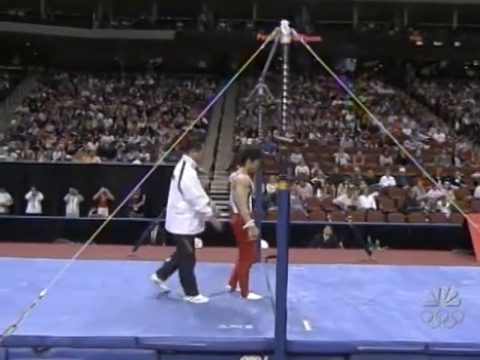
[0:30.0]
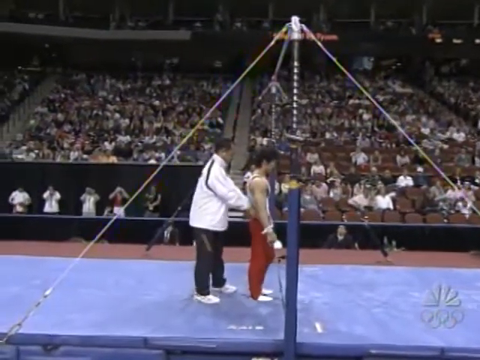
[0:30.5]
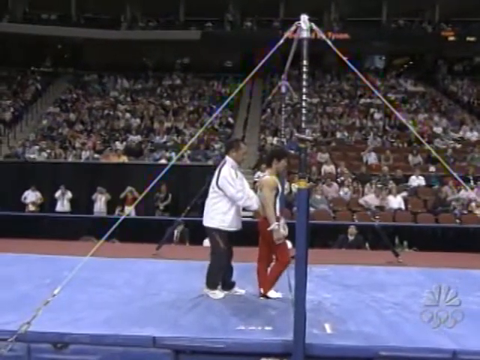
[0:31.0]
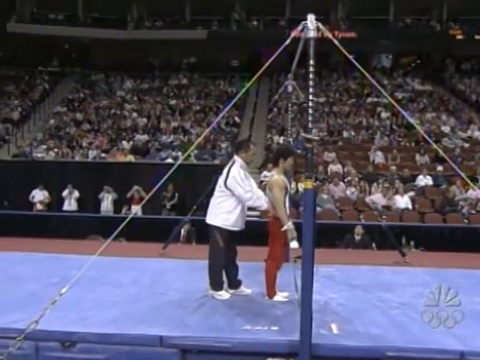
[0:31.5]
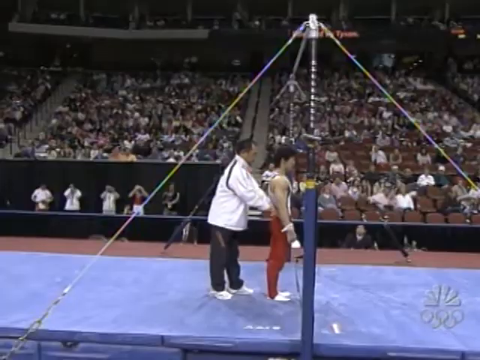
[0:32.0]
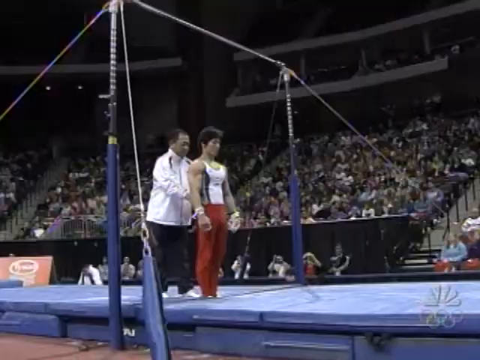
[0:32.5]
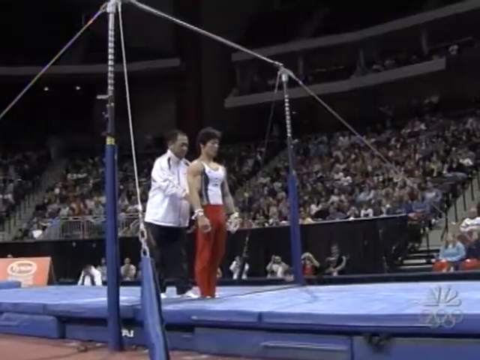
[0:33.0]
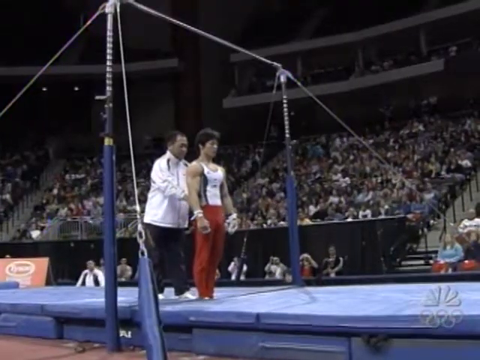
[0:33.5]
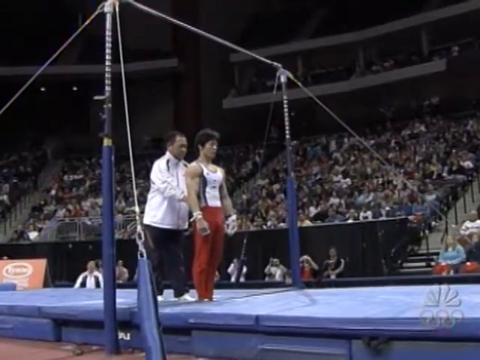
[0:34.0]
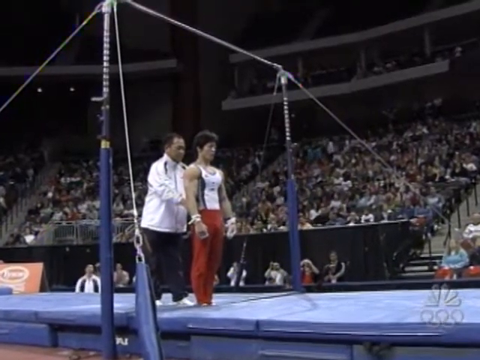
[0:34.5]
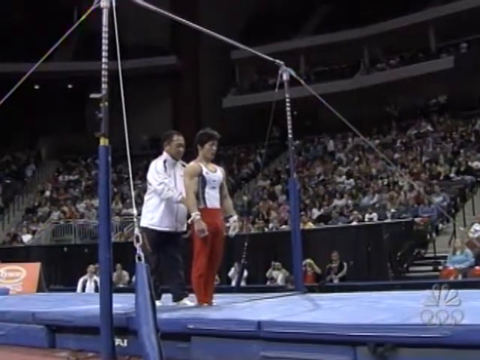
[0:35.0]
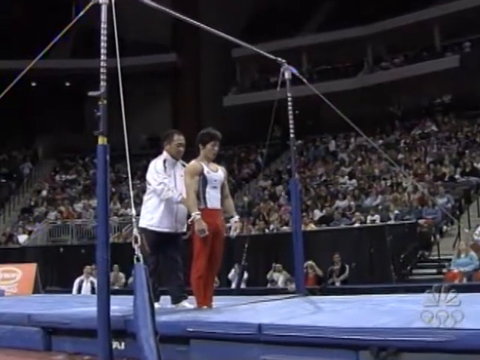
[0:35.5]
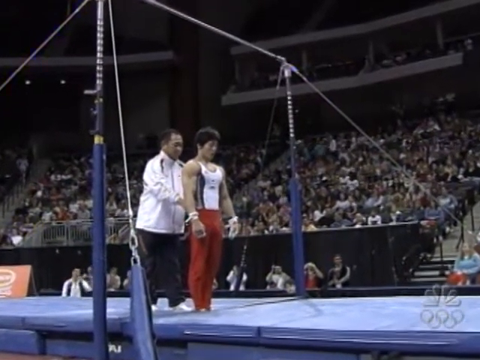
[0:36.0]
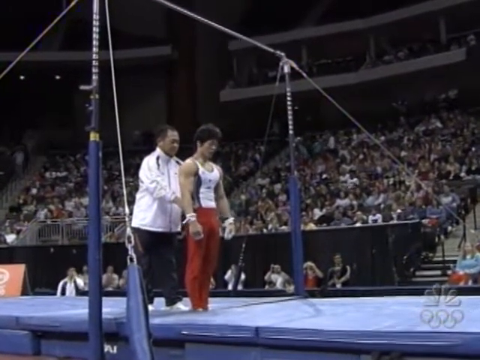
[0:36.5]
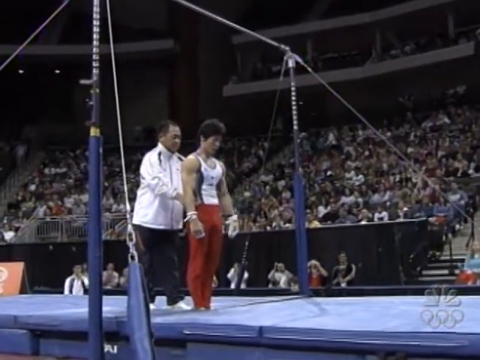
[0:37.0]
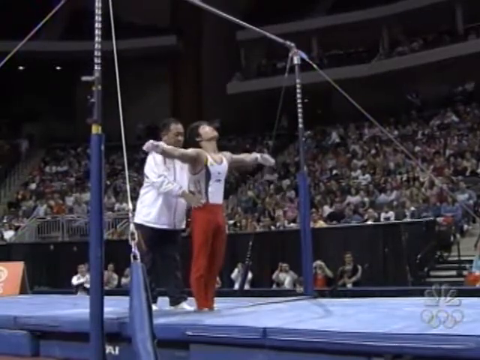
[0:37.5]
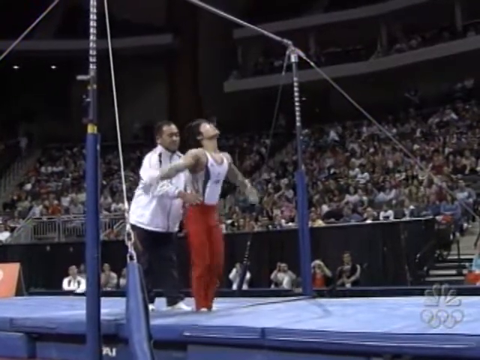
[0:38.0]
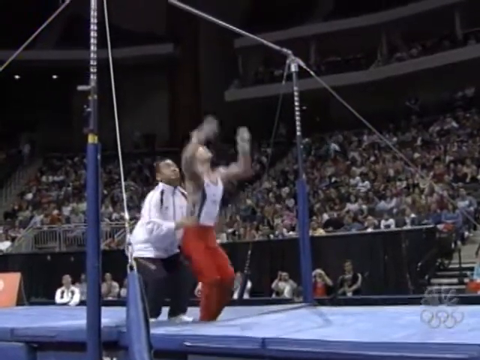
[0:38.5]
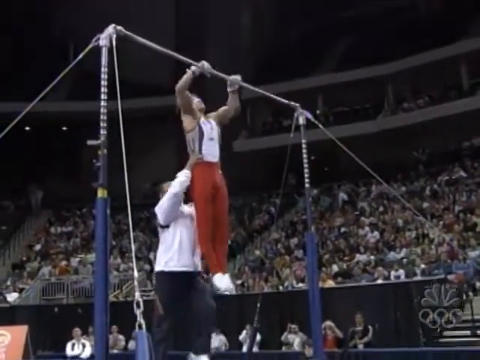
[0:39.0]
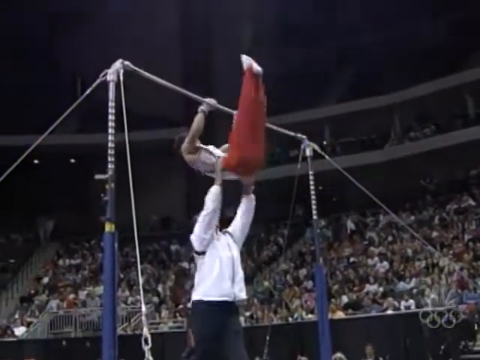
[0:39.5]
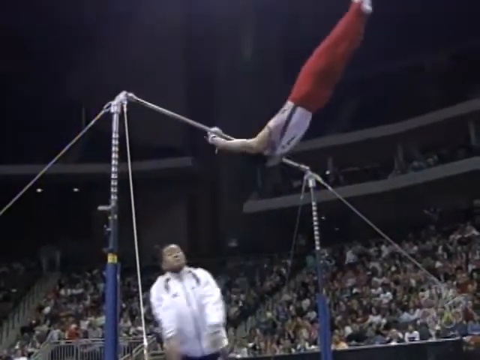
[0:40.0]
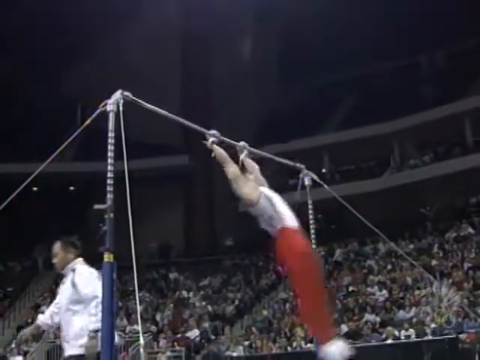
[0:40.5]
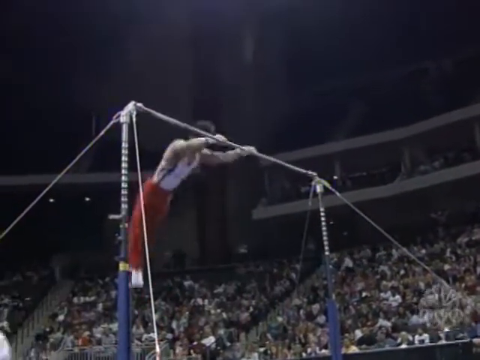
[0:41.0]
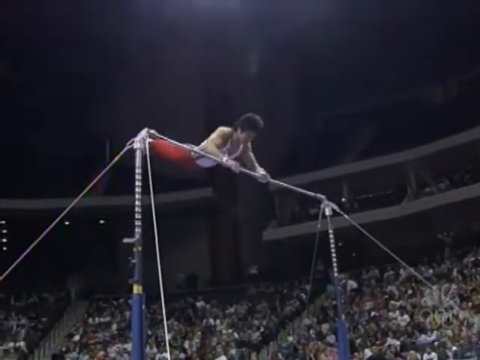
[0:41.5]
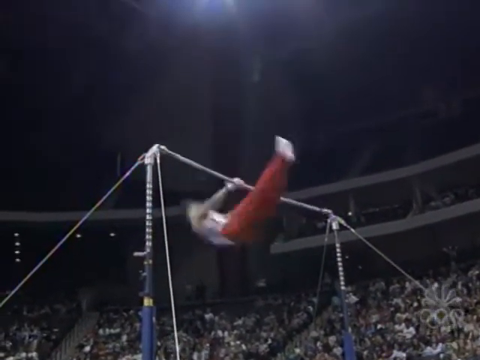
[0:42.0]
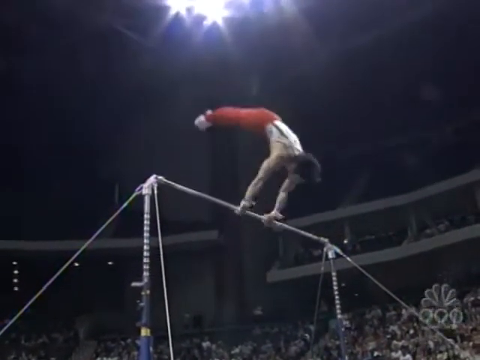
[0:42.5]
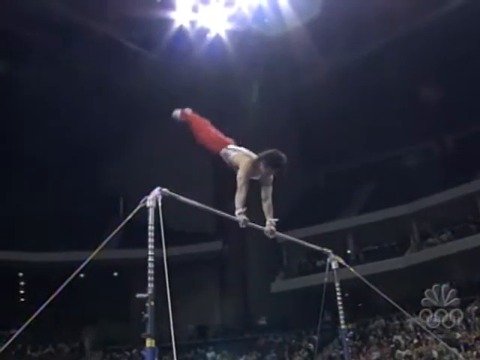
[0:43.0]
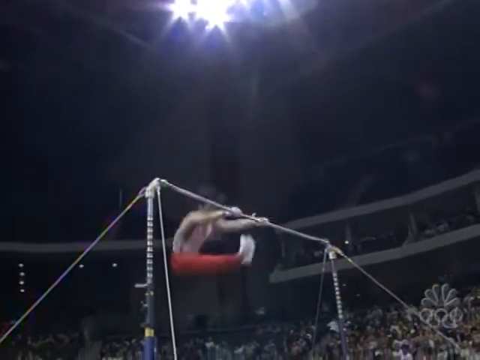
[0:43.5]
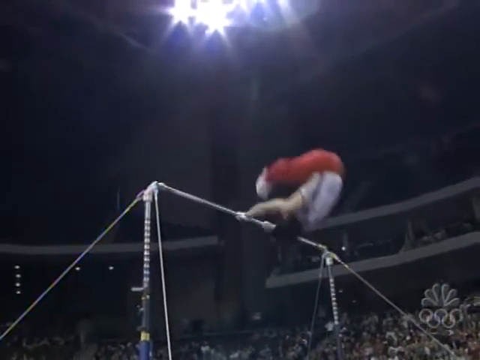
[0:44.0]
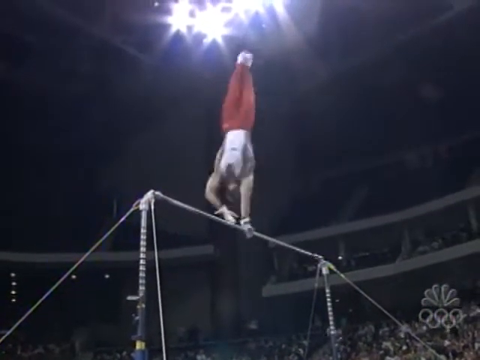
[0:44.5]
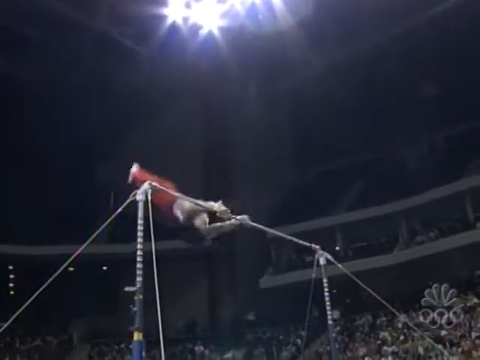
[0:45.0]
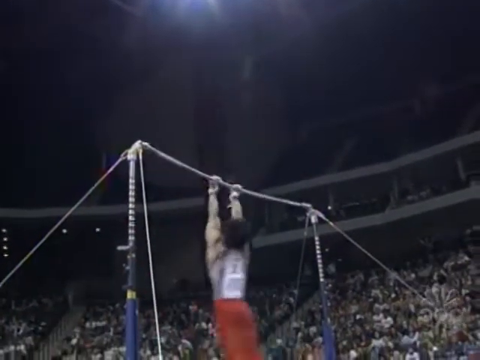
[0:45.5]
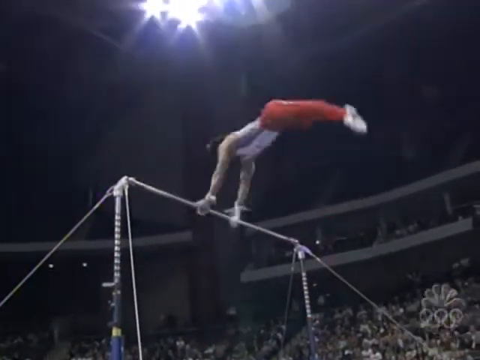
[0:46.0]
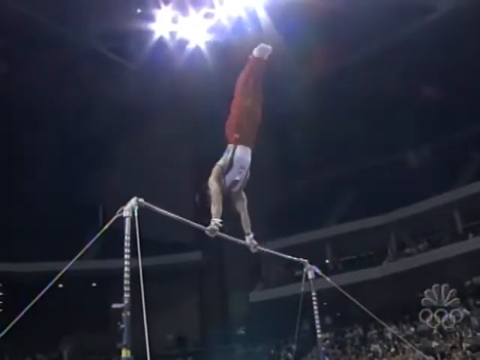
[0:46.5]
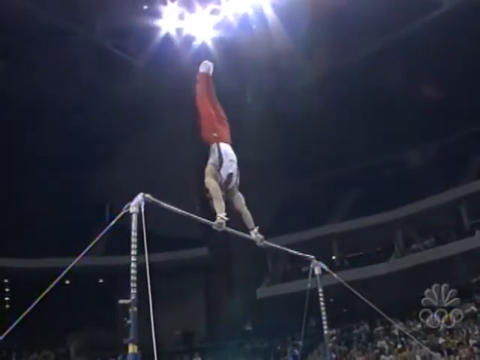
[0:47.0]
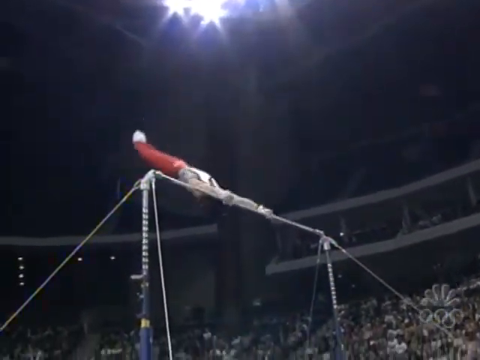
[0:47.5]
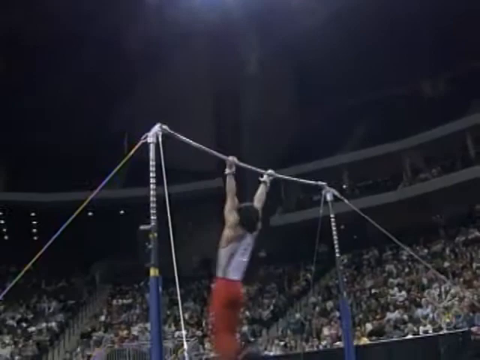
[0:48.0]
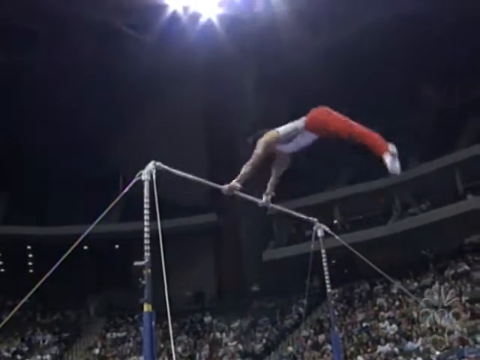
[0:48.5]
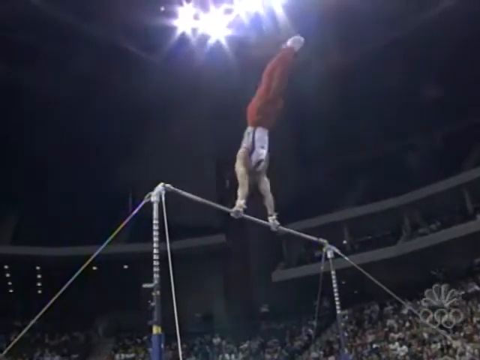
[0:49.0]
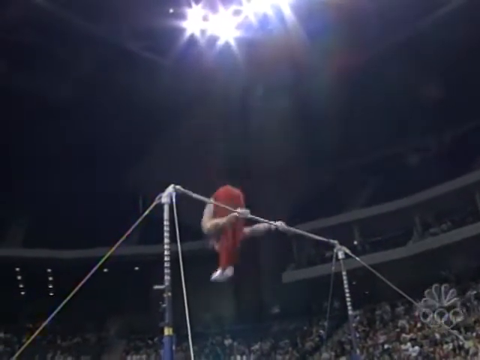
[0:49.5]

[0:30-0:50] The coach puts both hands on the athlete's hips while standing right behind him, seemingly acting as a spotter. The angle changes from a view of the athlete and coach from the back to a view more from the front, still fairly far away, showing their full bodies. The coach seems to help the athlete get up to the bar: the athlete bends down with his knees fully bent, about to jump, and the coach helps propel him upwards. He holds on to the bar and swings to the front with his body fully straightened, then swings to the back. His body goes above the bar, he does a spinning motion with his legs very close to the bar, and he does basically a handstand on the bar with his legs fully up before coming down. On the second turn, as he comes back up, he swaps the position of his arms as he fully spins in the air.